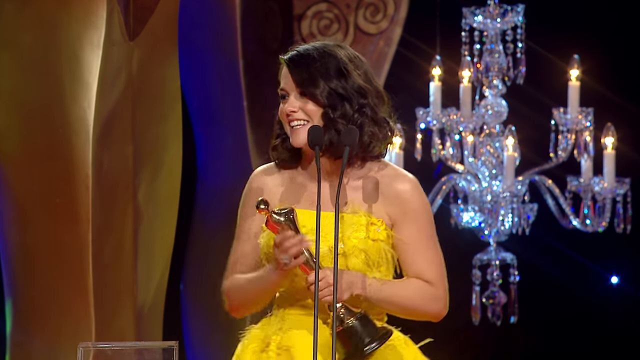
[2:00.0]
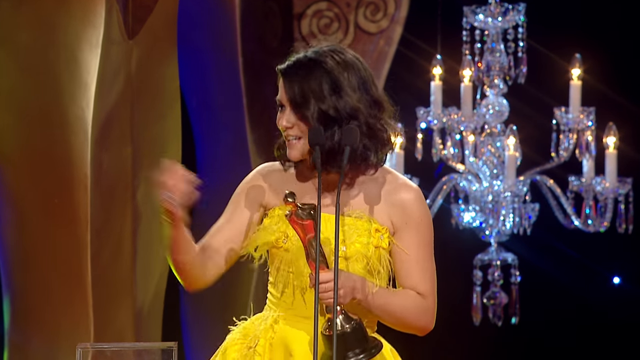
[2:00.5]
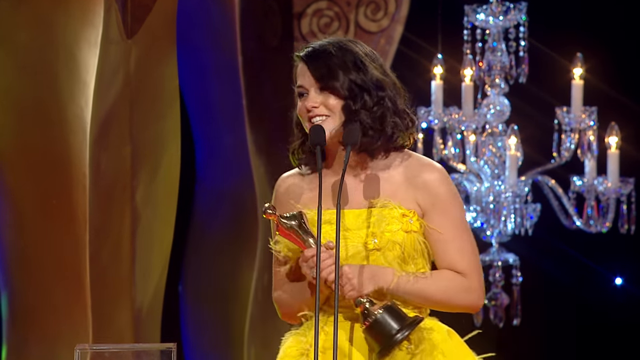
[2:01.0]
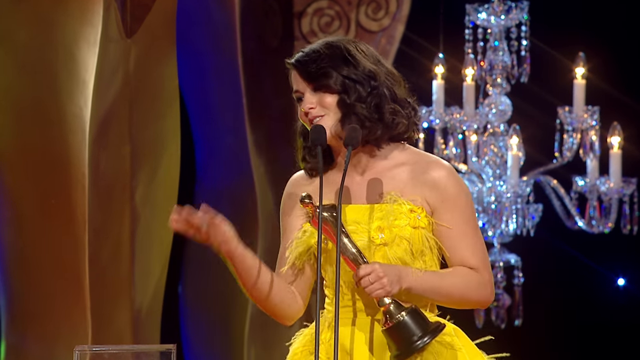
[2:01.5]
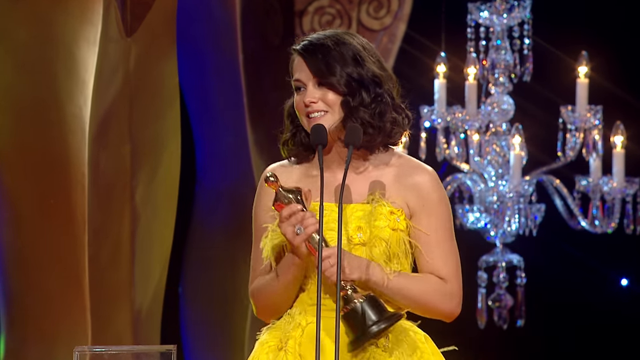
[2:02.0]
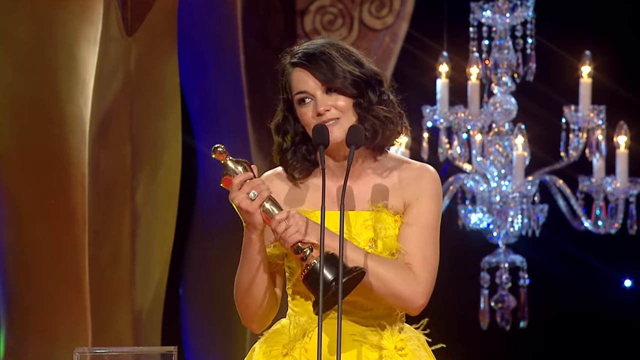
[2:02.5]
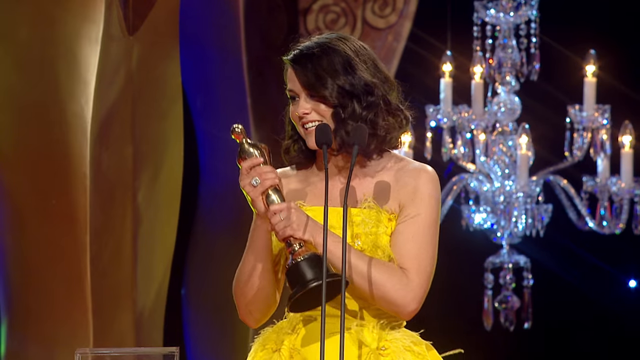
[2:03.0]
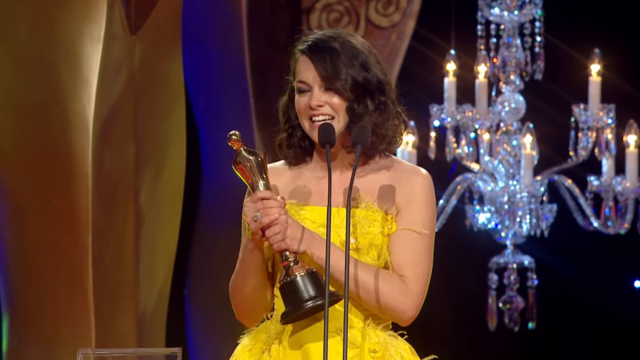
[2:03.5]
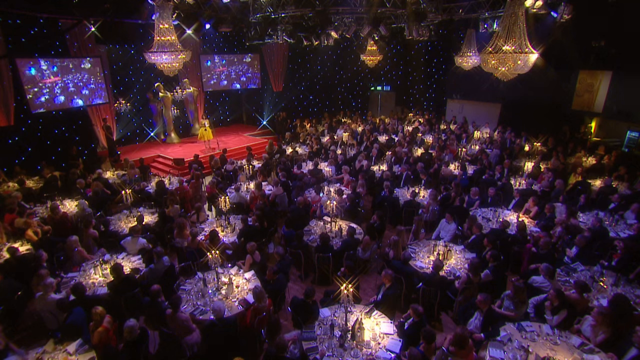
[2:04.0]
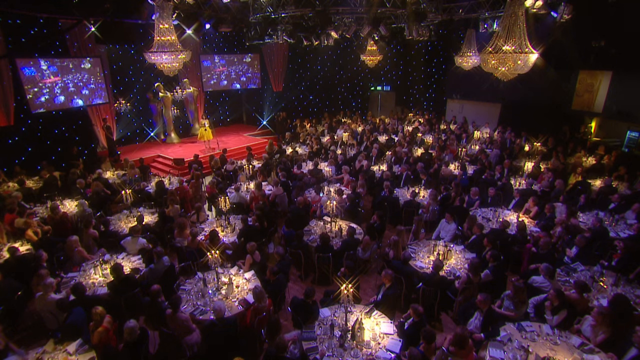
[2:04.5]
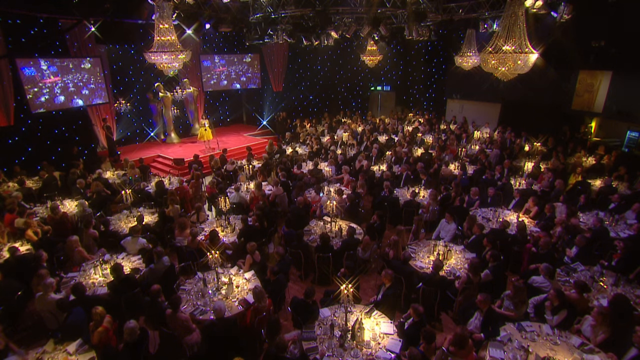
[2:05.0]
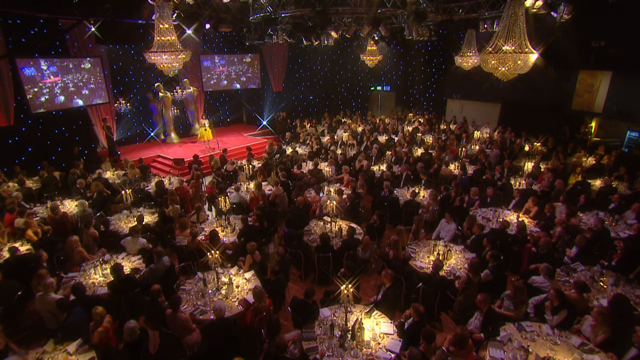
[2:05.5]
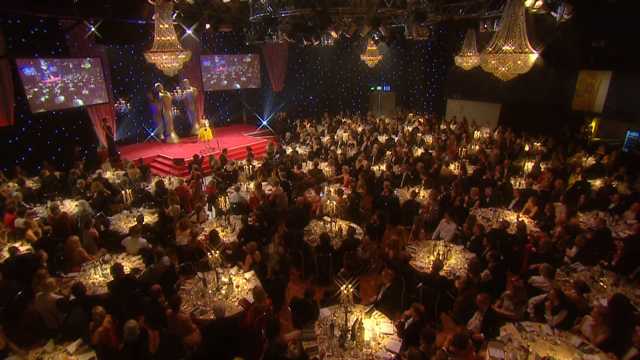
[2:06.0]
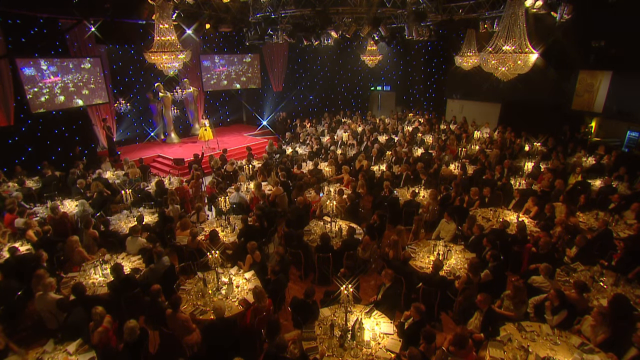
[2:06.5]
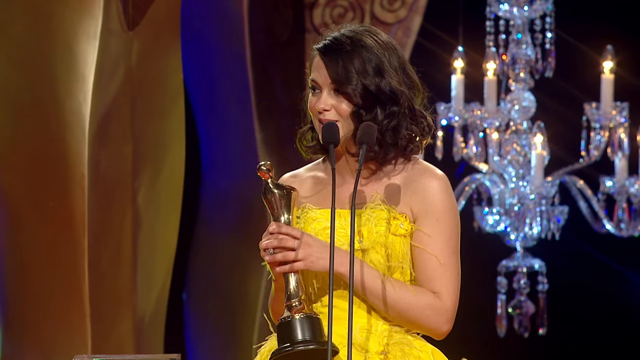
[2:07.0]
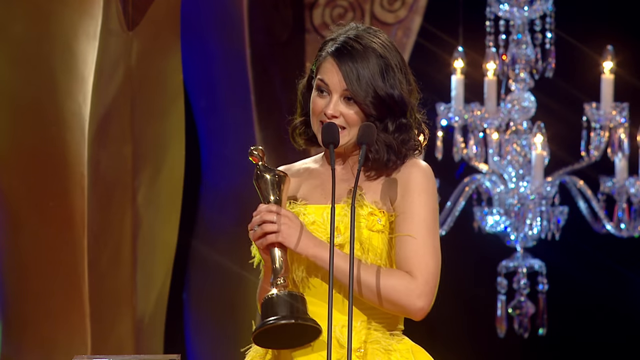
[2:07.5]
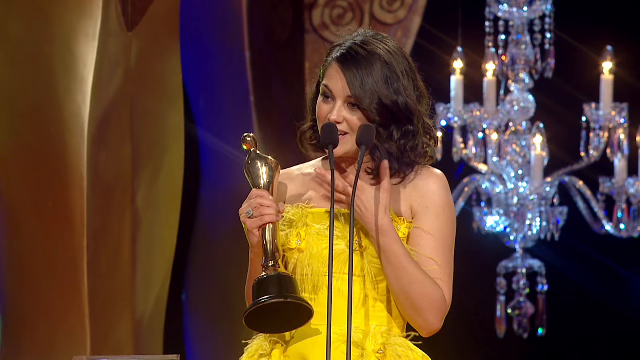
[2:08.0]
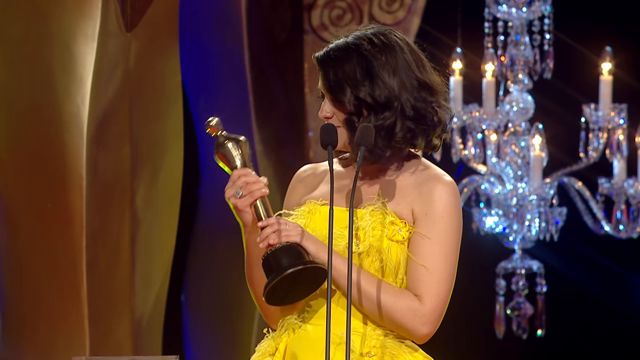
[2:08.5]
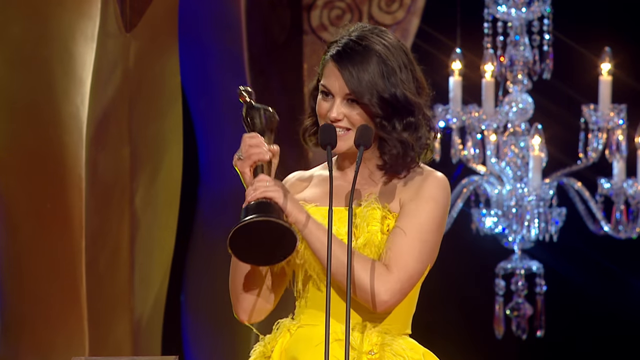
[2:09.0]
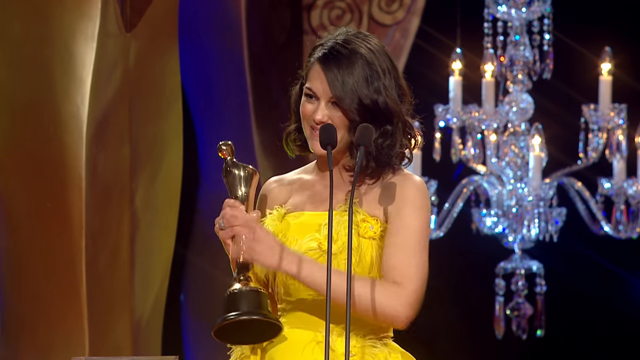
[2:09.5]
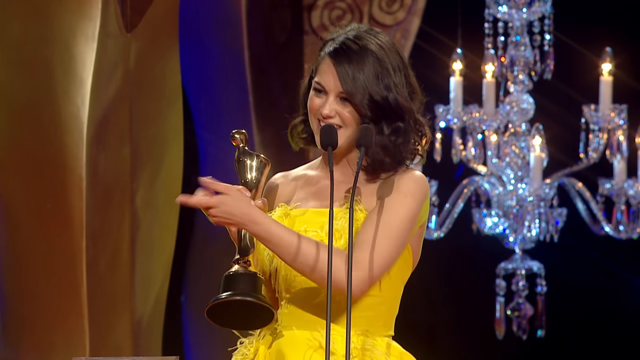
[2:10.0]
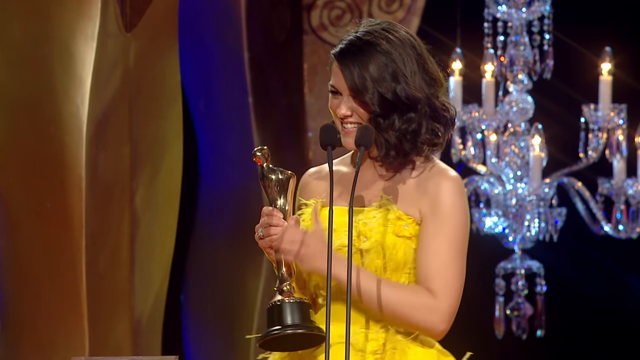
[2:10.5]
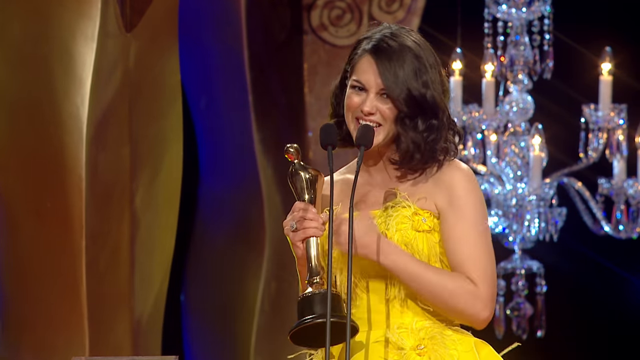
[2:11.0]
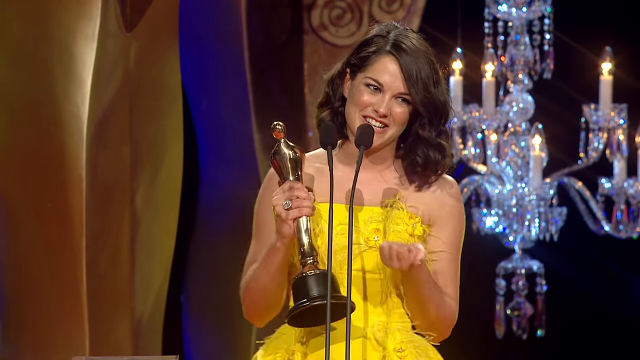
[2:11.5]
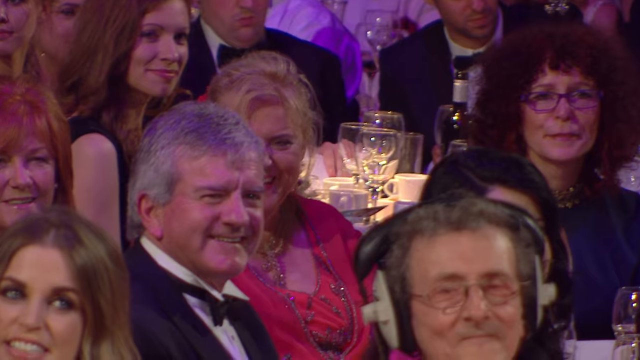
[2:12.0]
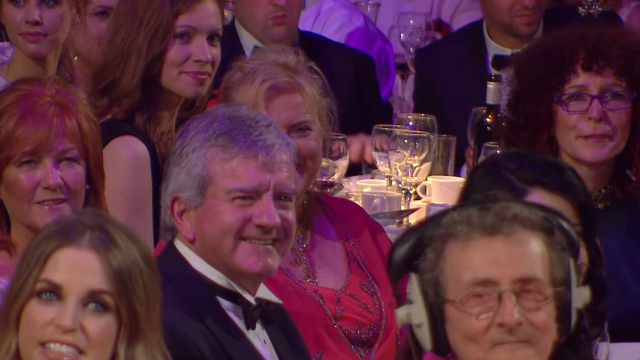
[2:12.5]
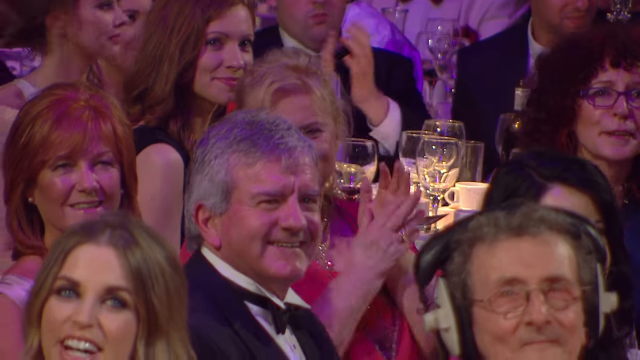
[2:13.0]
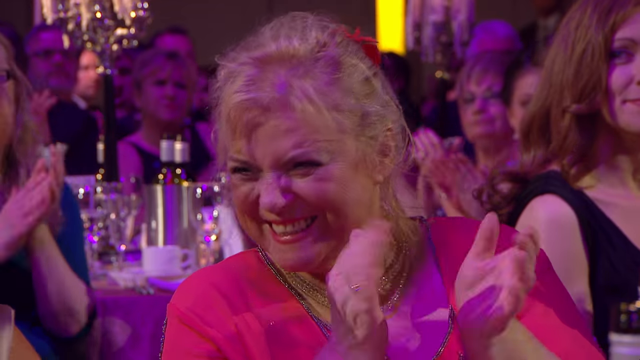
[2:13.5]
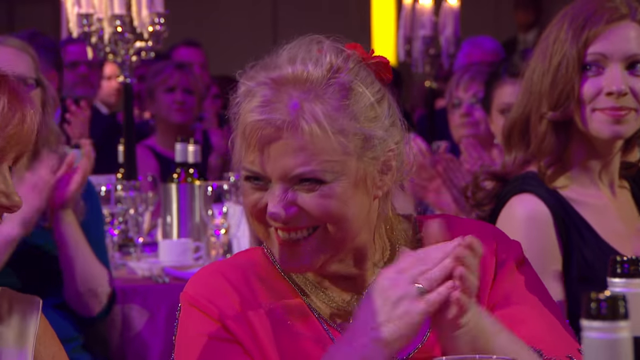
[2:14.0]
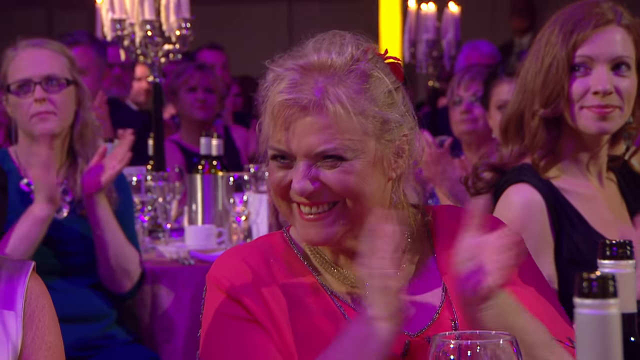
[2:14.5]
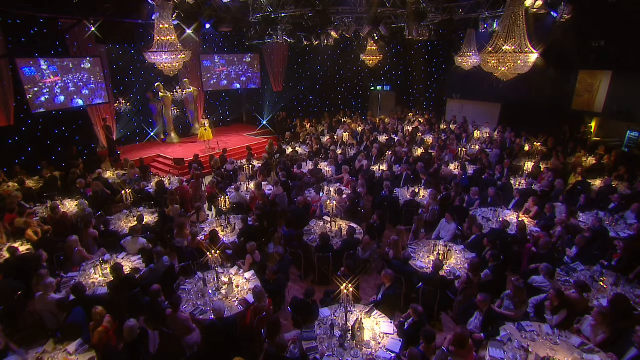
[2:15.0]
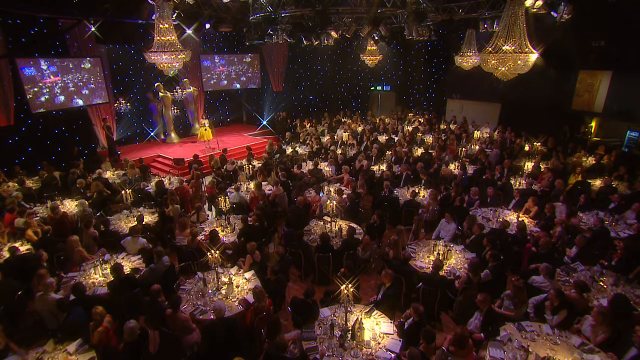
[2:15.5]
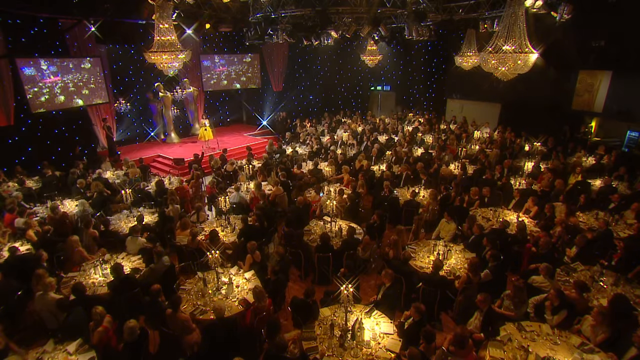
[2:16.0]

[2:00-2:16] The brown-haired woman in the yellow dress is on the stage to accept her award, with the red carpet and chandeliers in the background and wavy gold-looking arches and blue to her left. She looks like she is thanking people, and she waves. The camera zooms out onto the audience, showing everyone, then zooms back in on her as she holds the award, shakes it and points to people in front of her. The camera then pans to a woman in a pink dress and everybody starts clapping, and the video ends panning out from the audience.